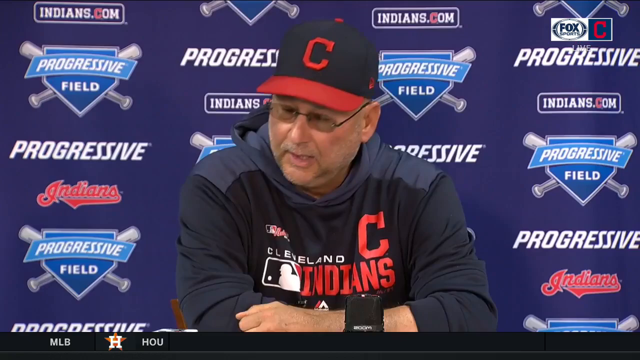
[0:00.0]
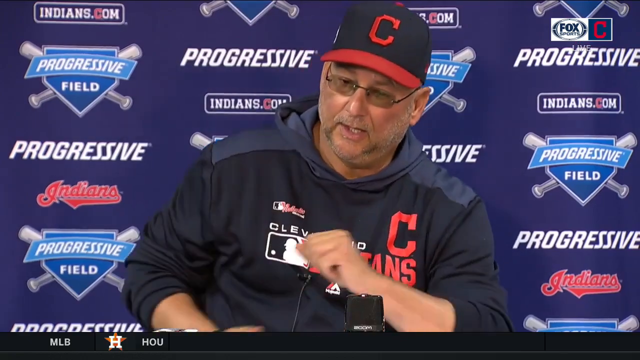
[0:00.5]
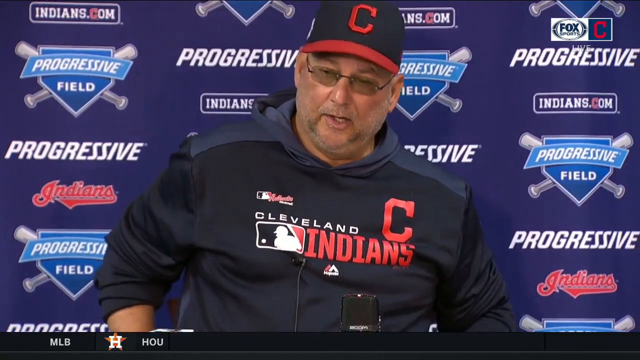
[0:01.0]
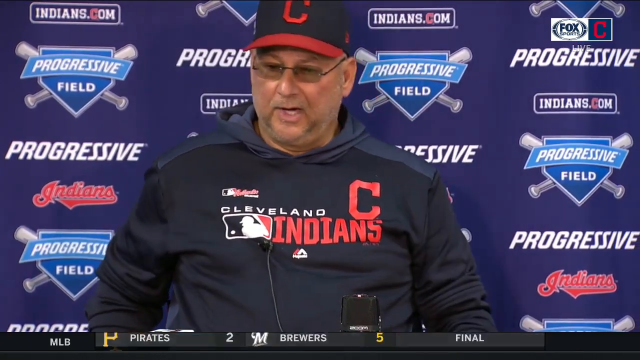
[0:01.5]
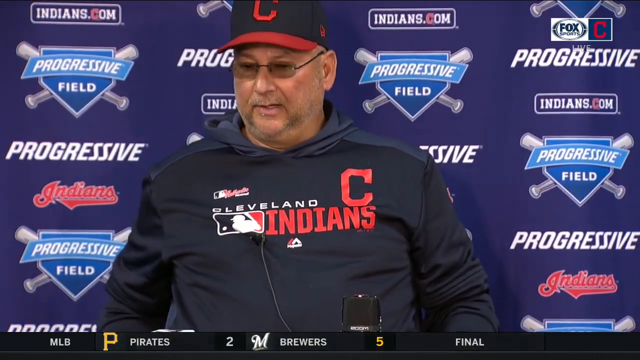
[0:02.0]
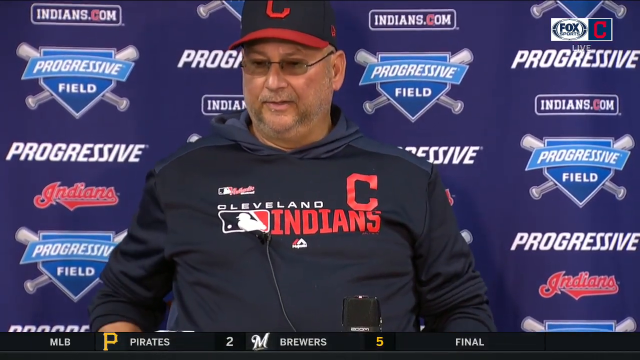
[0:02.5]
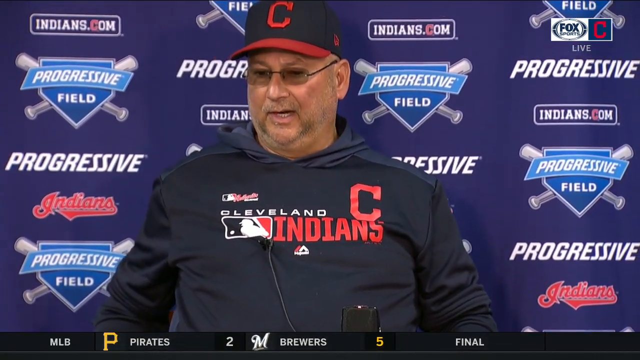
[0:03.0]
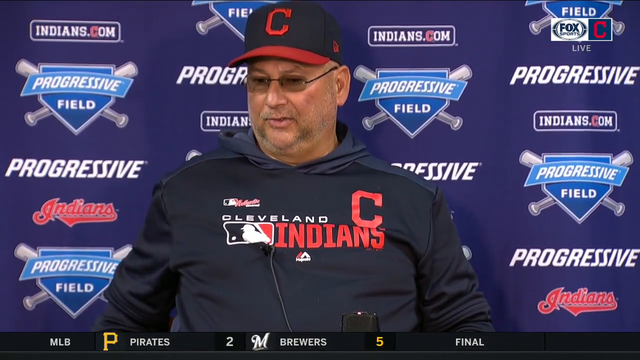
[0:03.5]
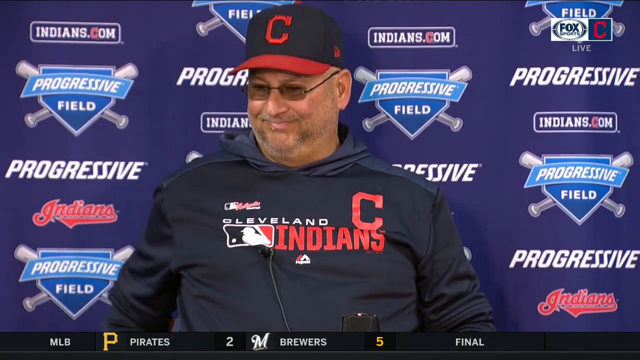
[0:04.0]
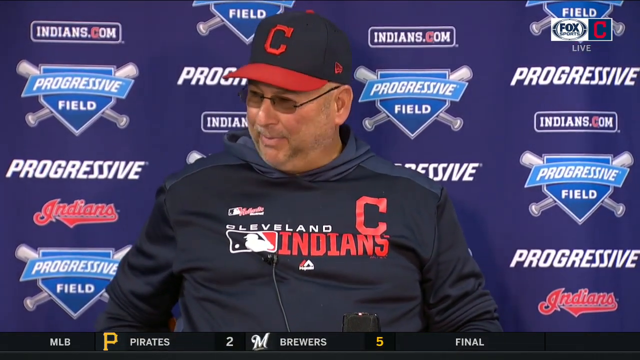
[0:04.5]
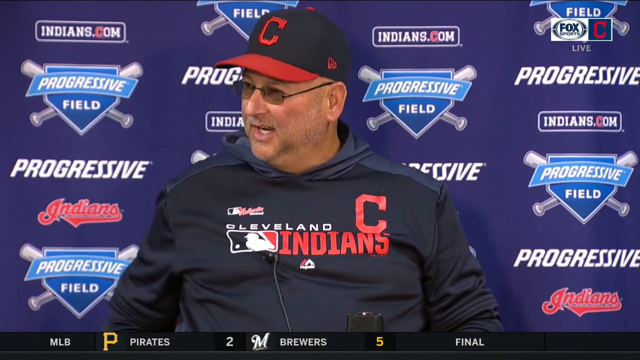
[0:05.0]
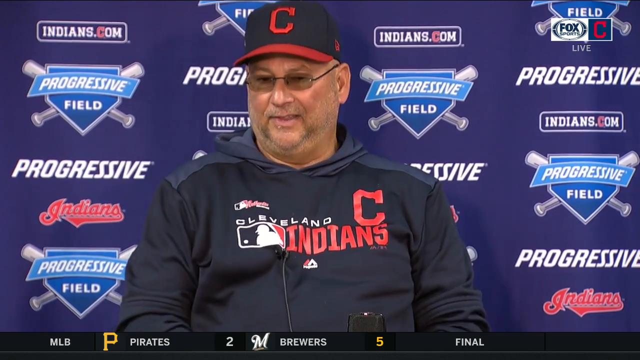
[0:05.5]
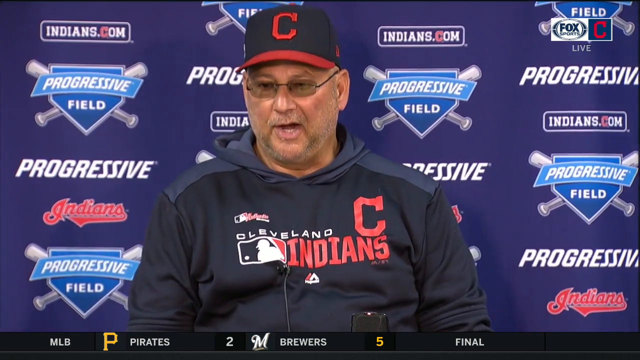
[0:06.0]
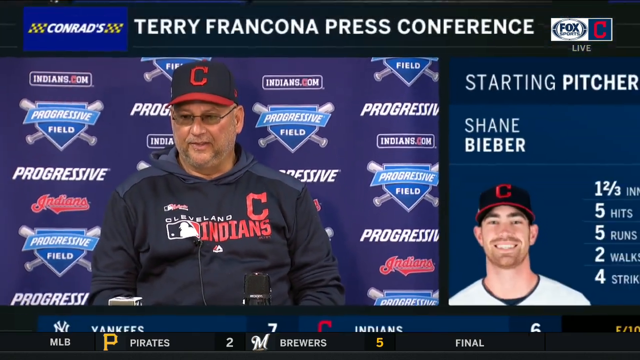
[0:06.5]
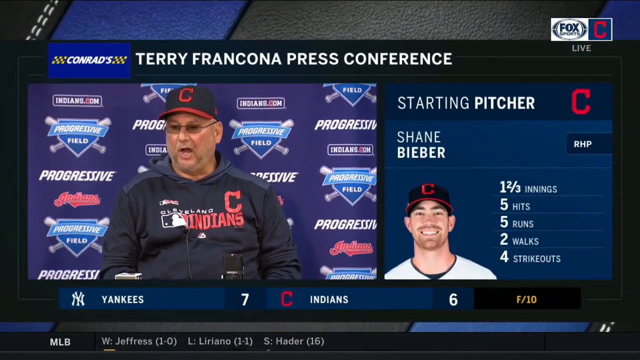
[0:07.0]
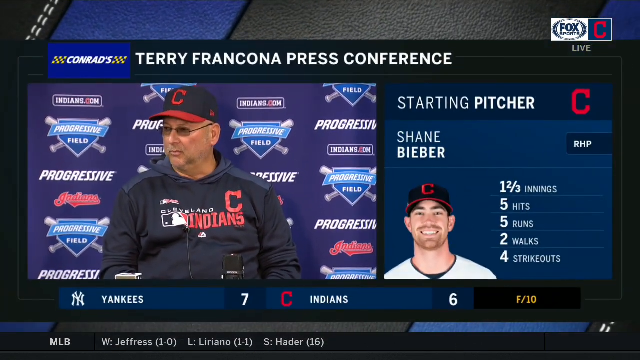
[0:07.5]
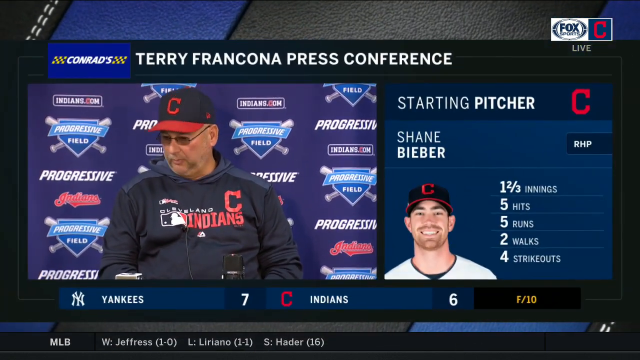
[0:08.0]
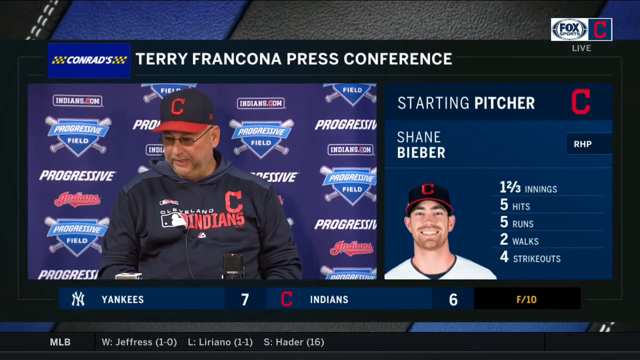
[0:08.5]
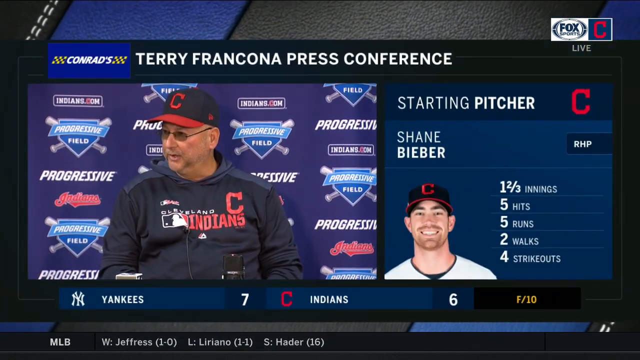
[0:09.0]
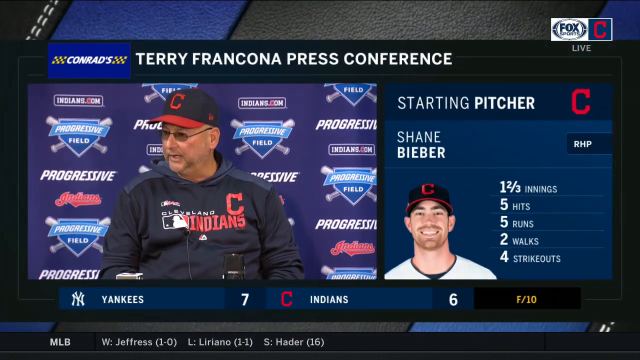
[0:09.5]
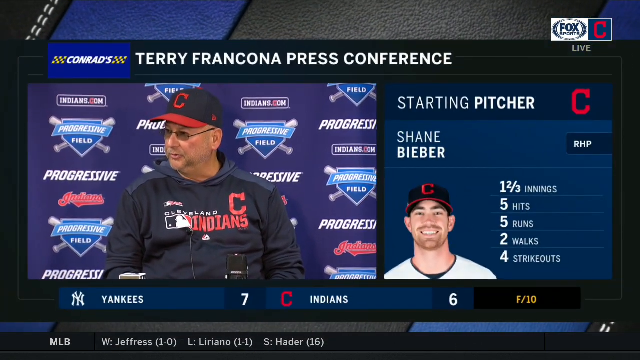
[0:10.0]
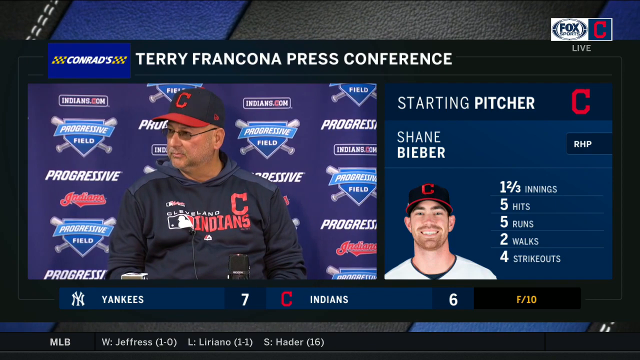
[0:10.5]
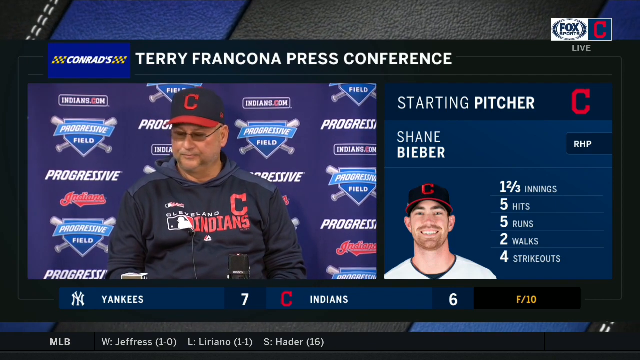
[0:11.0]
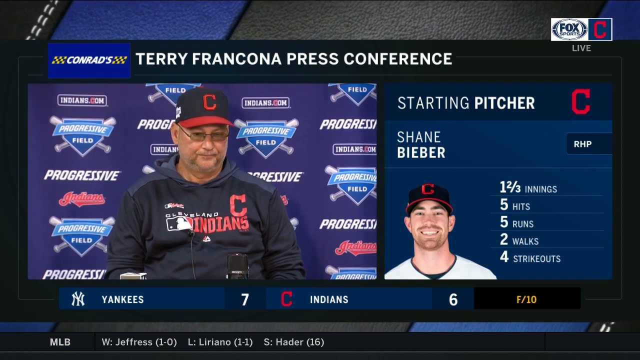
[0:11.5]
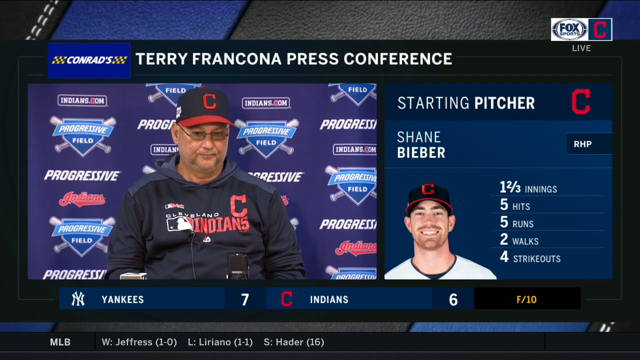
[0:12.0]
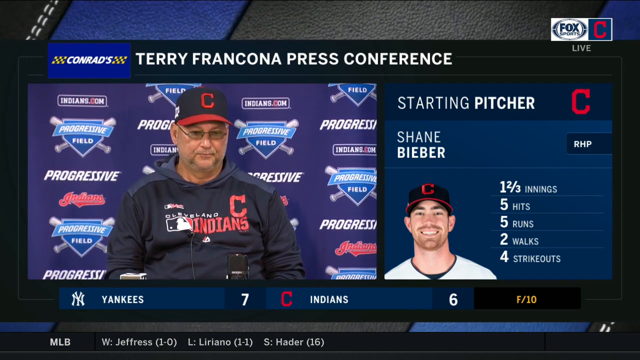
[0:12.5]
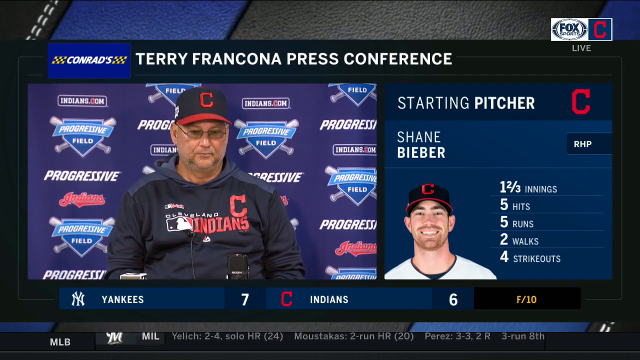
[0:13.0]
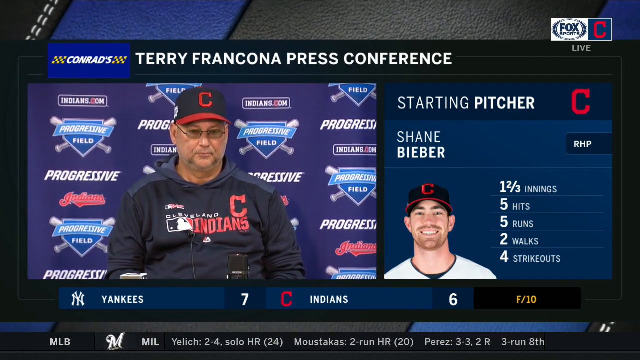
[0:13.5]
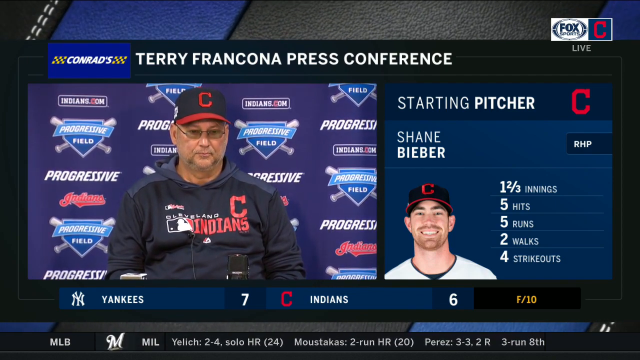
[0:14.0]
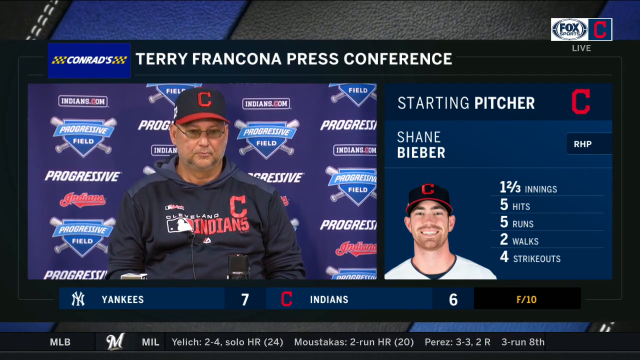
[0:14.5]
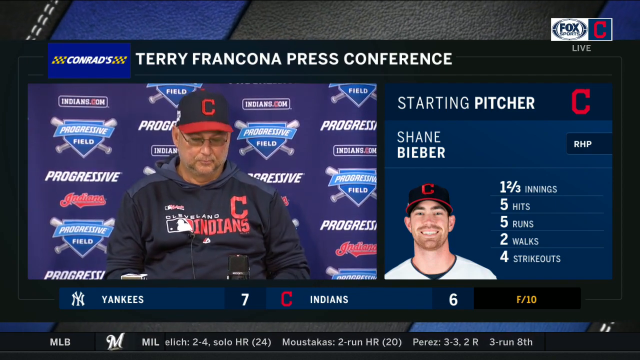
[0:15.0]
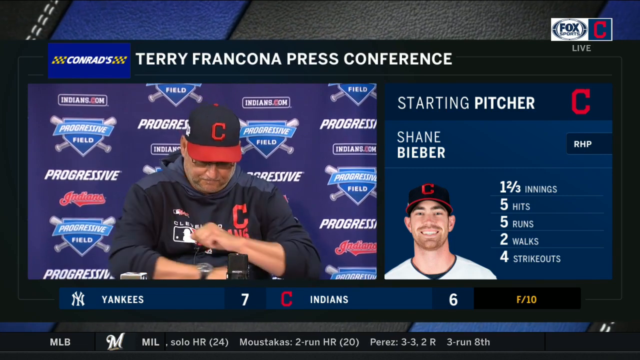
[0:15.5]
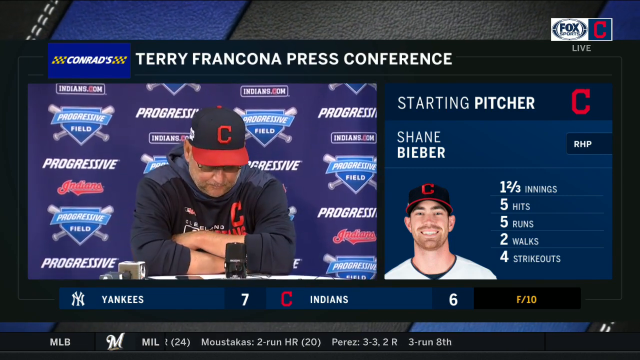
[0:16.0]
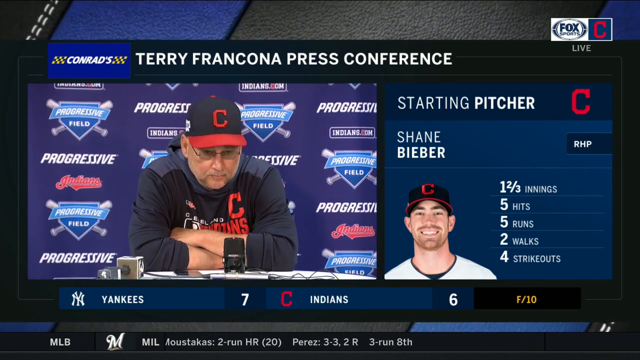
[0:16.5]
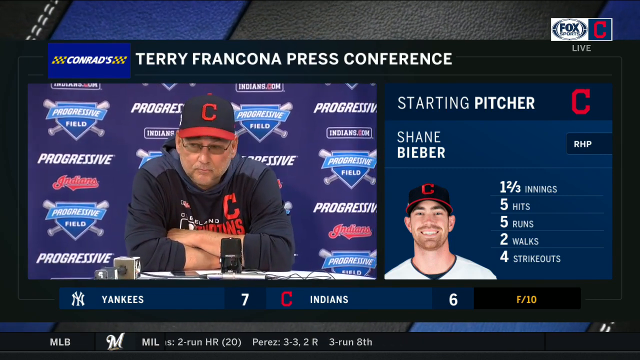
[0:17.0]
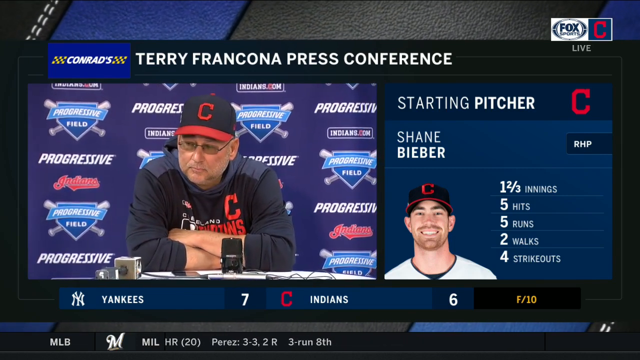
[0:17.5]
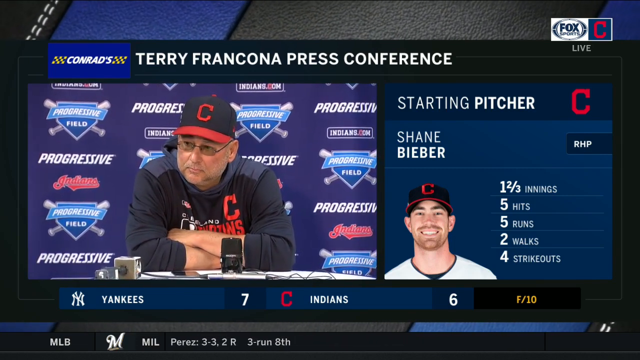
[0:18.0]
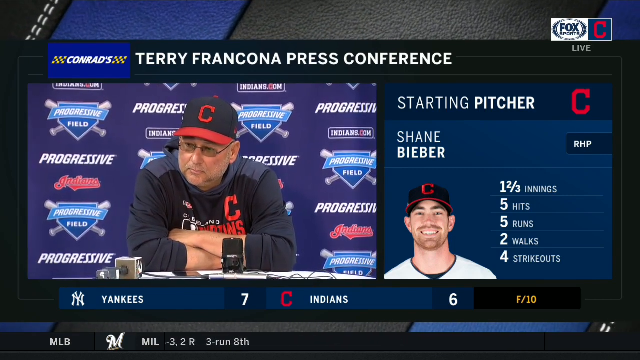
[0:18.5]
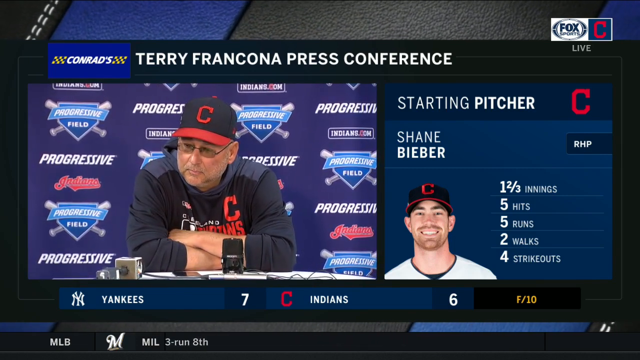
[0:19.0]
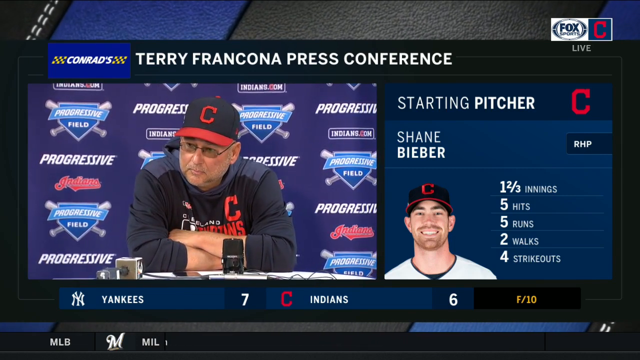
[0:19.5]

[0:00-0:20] A baseball coach wears a sweater with a Cleveland Indians logo on it. On the right side of the screen, text reads "starting pitcher Shane Bieber" alongside a set of statistics for that player. On the left side, Terry Francona, the coach, talks to reporters at a press conference. Behind him is a backdrop of logos, including Progressive, Ford Field, the Cleveland Indians and ADS.com.